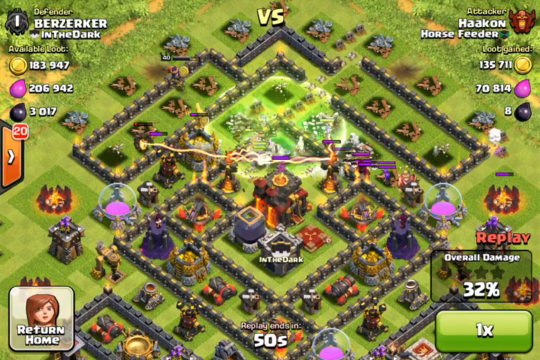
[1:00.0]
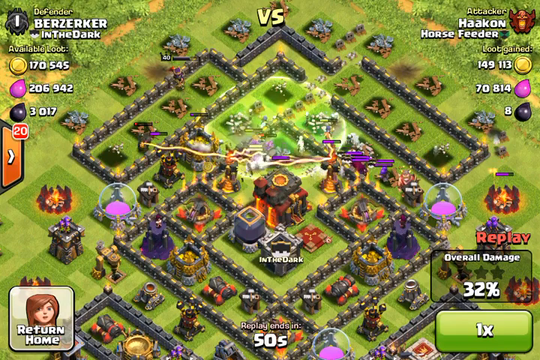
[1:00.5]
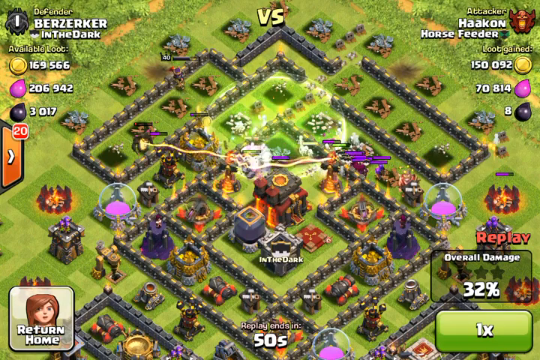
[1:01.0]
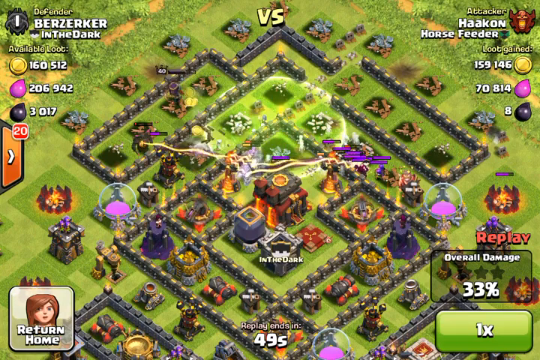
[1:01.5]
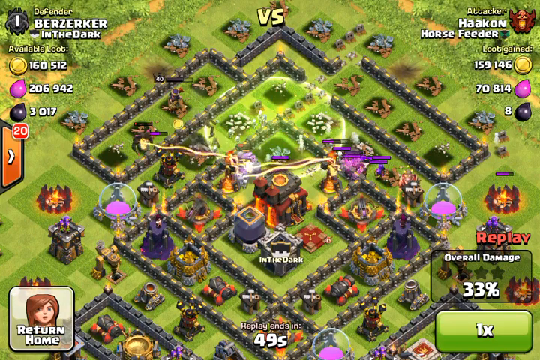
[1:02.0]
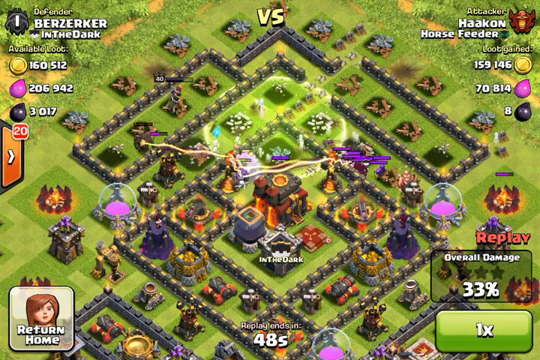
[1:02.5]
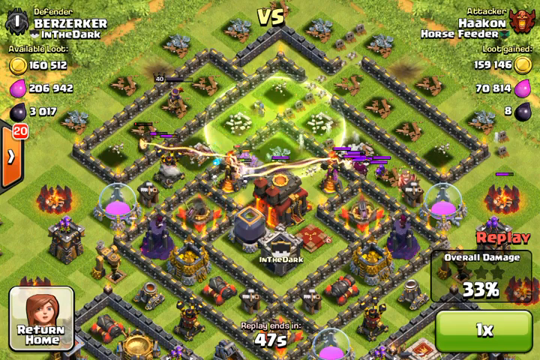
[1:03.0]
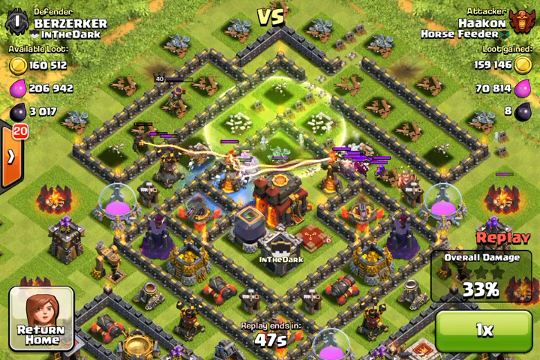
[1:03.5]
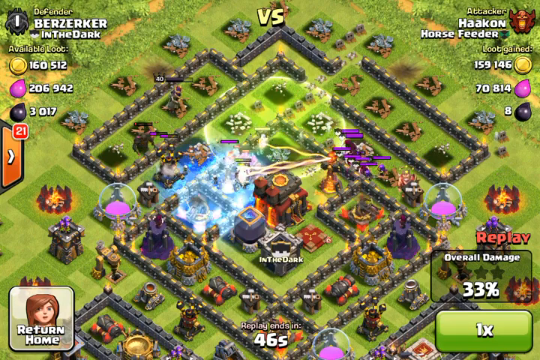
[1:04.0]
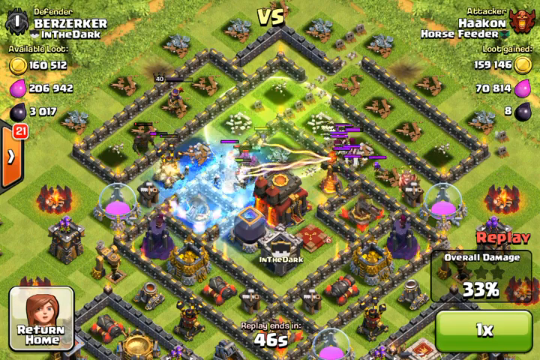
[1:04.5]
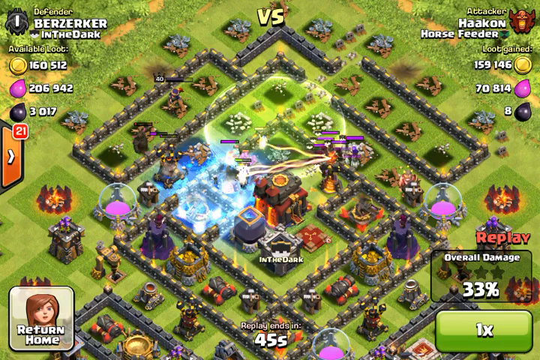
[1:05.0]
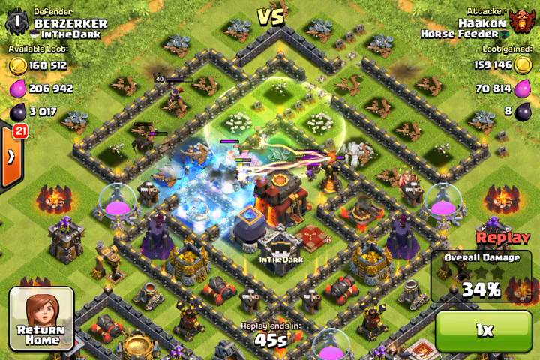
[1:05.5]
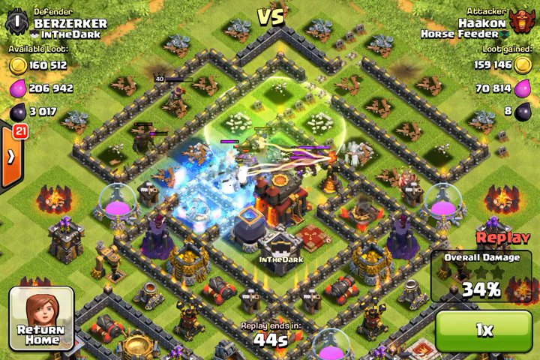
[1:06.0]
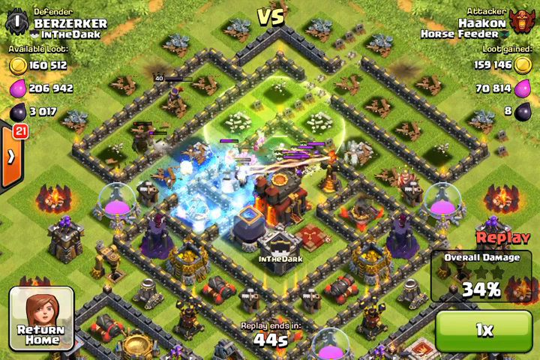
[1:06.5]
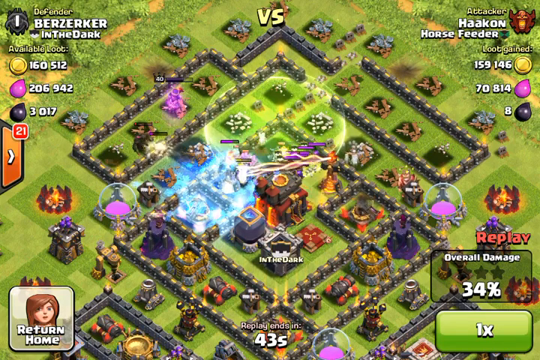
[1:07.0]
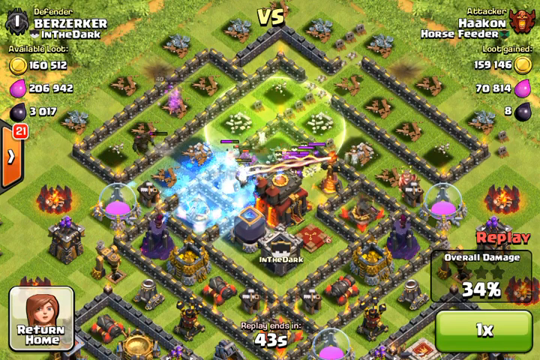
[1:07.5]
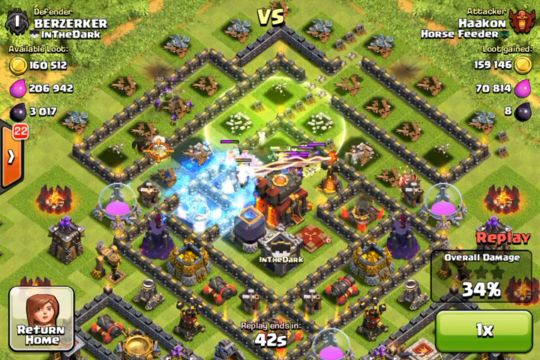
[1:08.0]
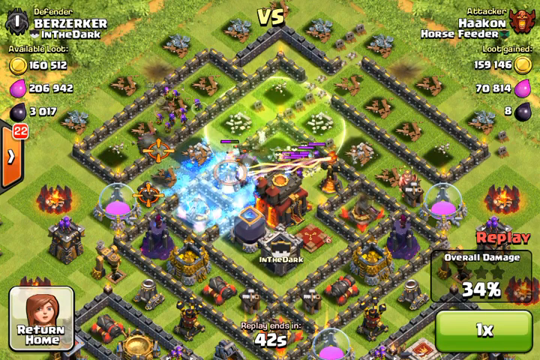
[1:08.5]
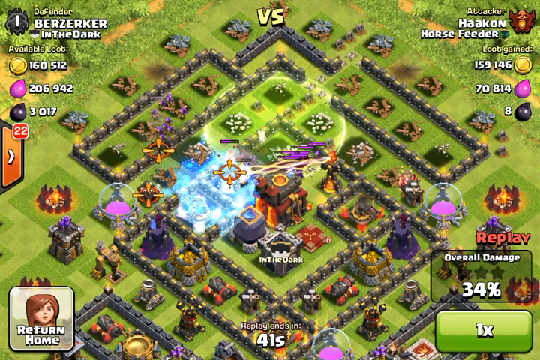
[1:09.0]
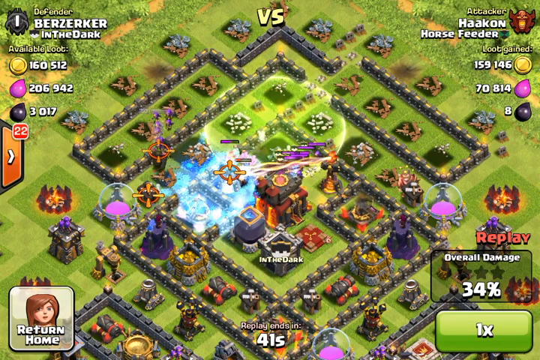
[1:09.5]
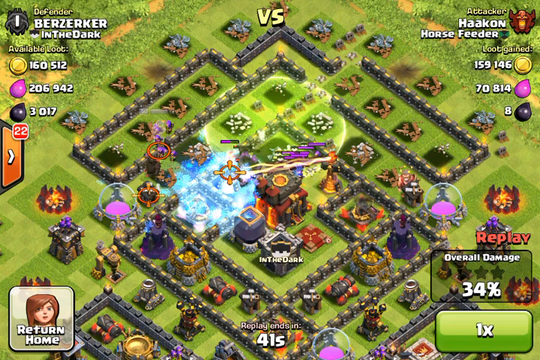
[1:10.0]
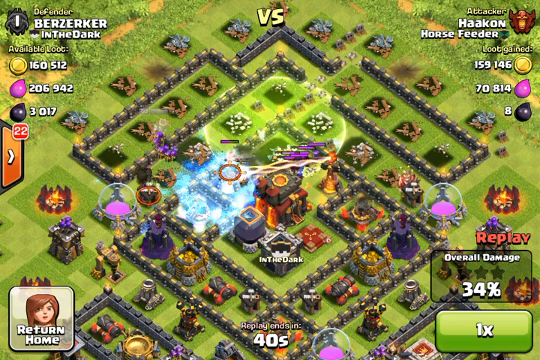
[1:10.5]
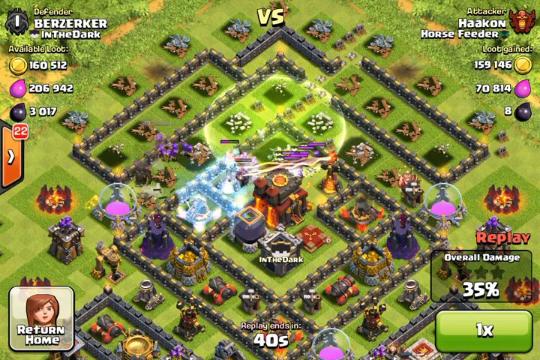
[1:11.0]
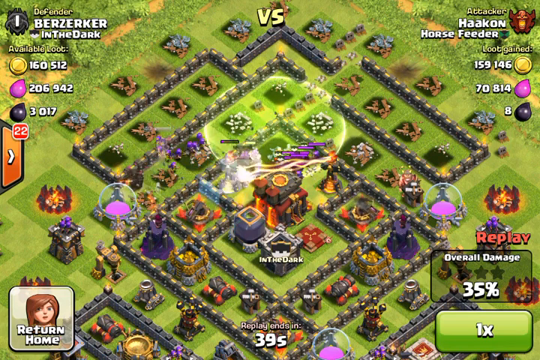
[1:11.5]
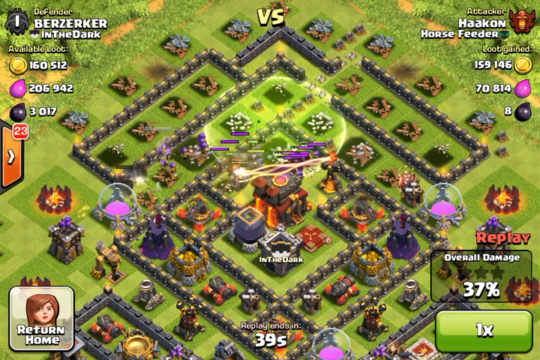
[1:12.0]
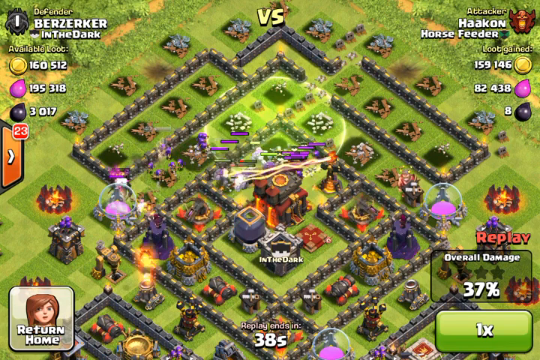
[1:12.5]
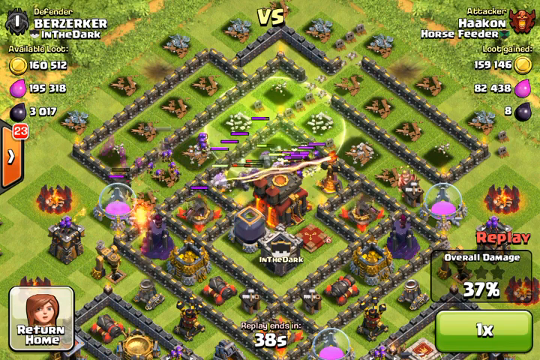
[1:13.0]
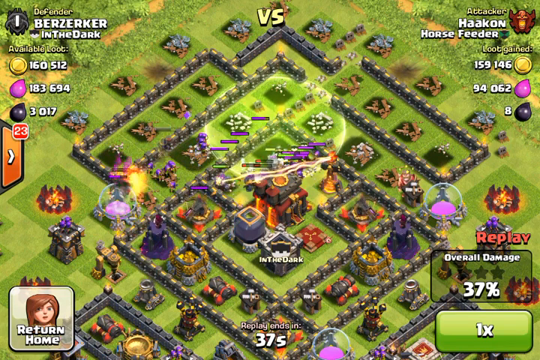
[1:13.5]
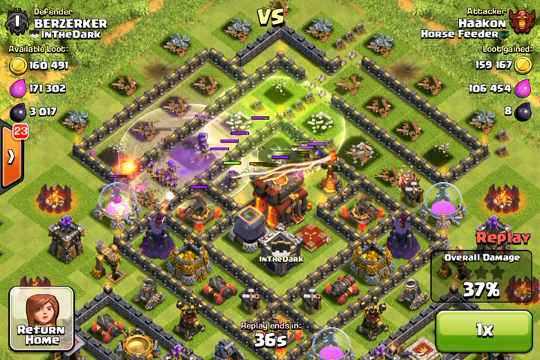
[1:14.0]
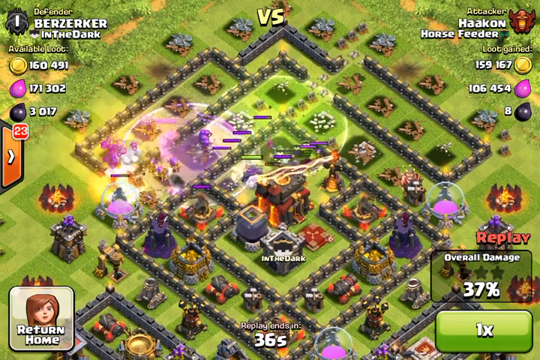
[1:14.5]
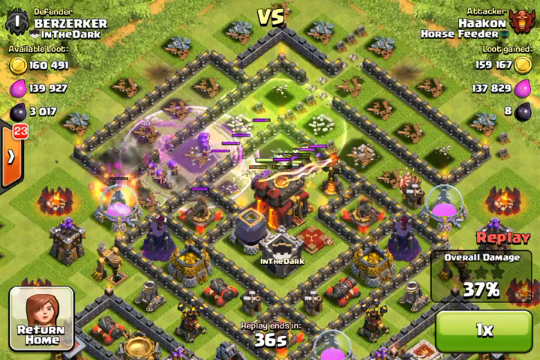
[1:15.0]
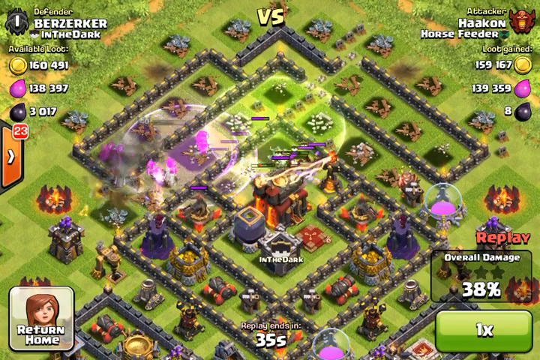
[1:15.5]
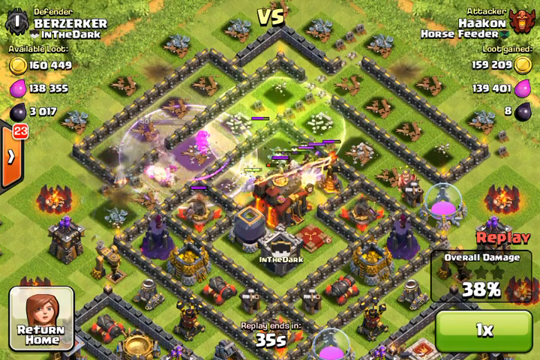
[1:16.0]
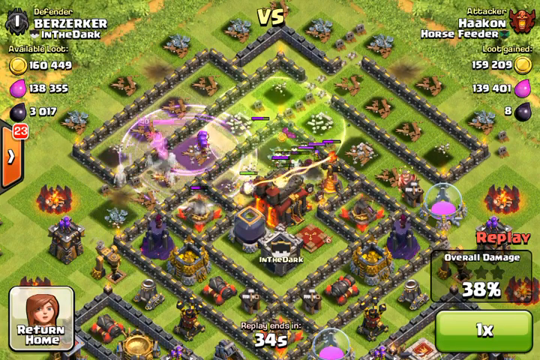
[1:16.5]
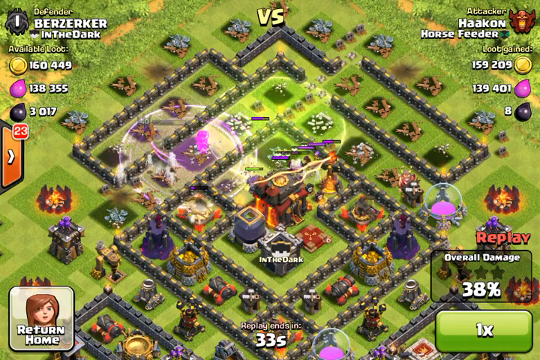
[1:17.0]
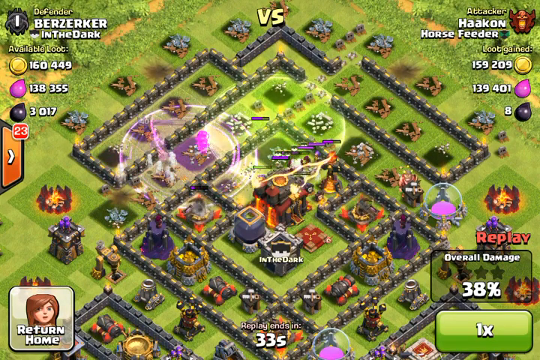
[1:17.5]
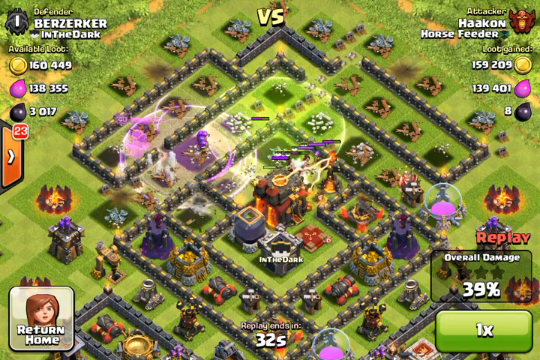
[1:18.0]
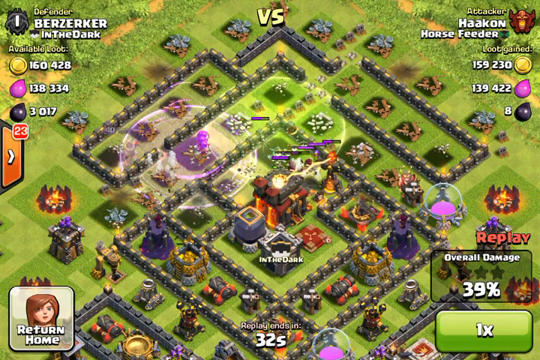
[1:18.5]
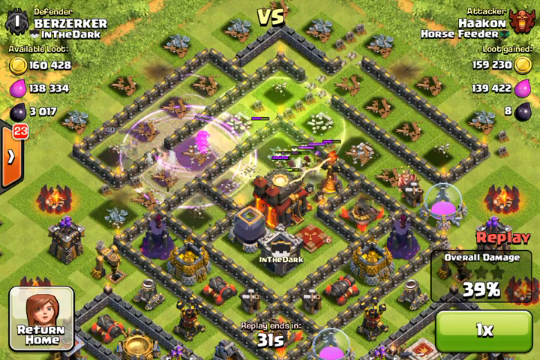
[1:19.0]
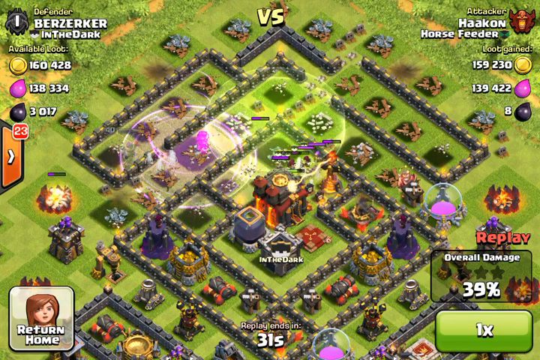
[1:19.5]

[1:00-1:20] The city's destruction continues from 33%. There seems to be little resistance stopping Horse Feeder, which keeps gaining loot and has moved mainly toward the left side of the city while focusing some attacks on the center. The words "in the dark" apparently appear just below one of the buildings, probably the main building, since a shield insignia or icon is right above it. That building is unscathed and its perimeter intact, though the defenses seem to have been breached at the top, above the building. The area takes heavy fire, with circles, target signs and little fire bombs hitting as the attackers advance. Overall damage moves up toward 40%. Berserker's resources shrink while Horse Feeder's grow.